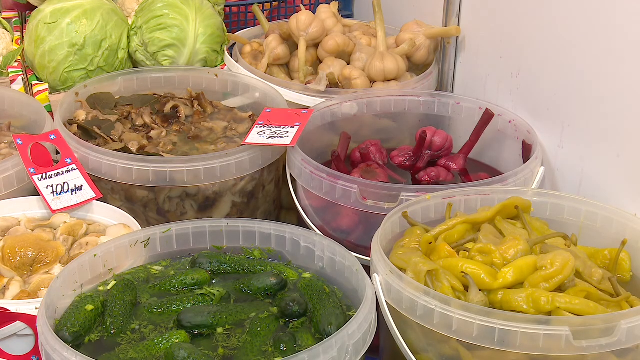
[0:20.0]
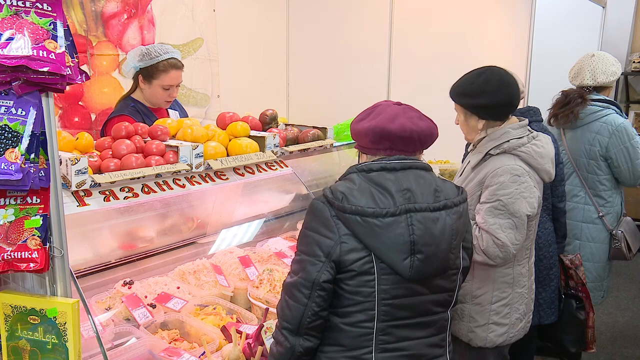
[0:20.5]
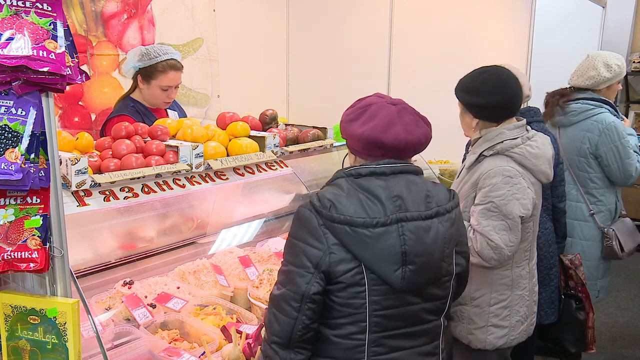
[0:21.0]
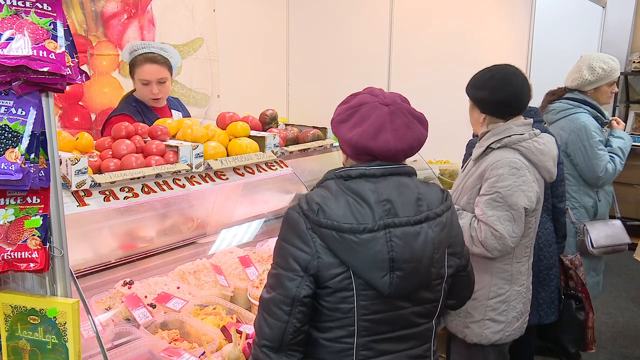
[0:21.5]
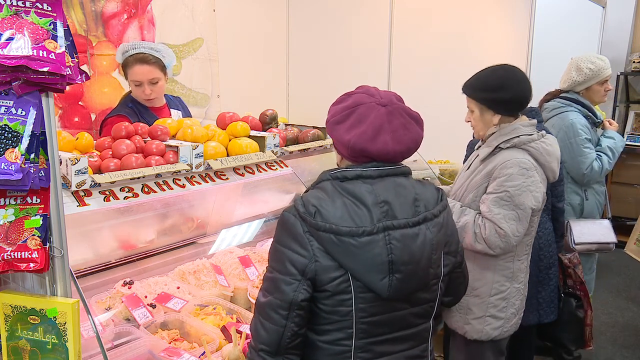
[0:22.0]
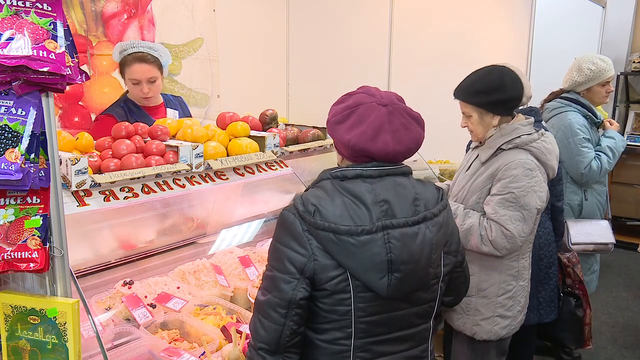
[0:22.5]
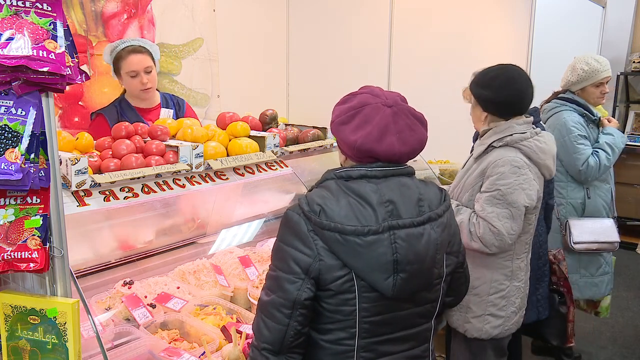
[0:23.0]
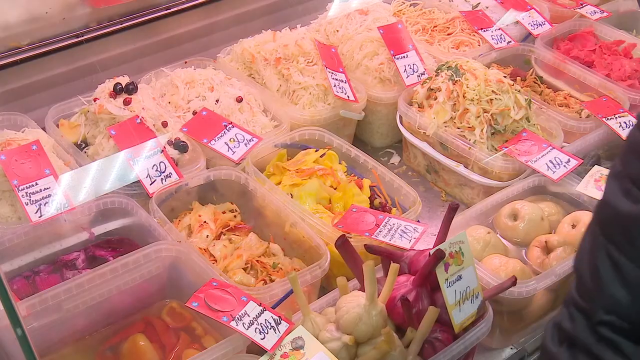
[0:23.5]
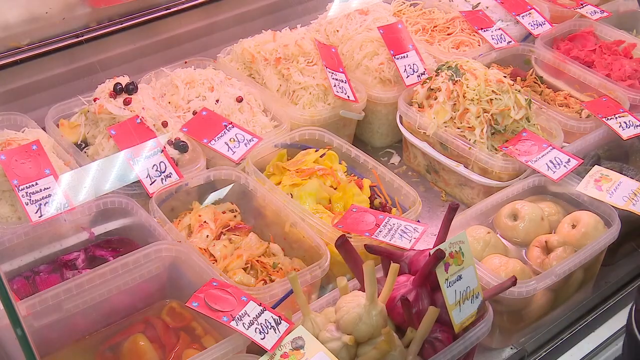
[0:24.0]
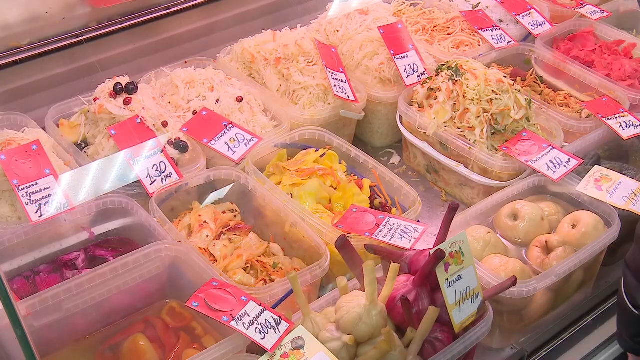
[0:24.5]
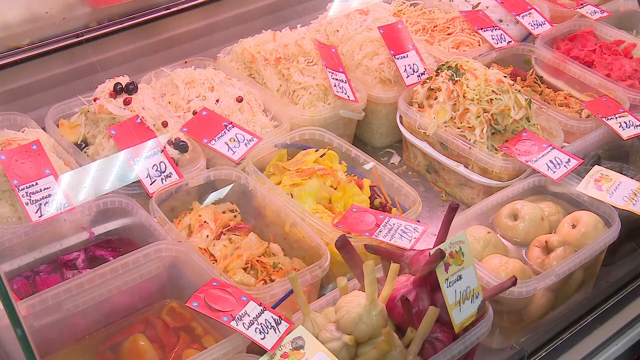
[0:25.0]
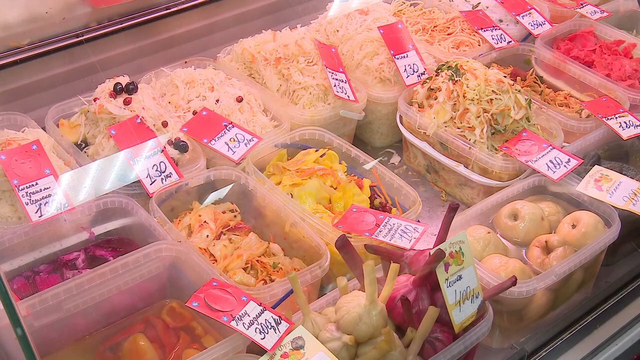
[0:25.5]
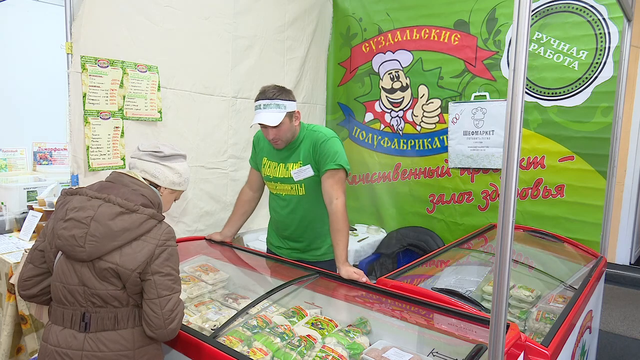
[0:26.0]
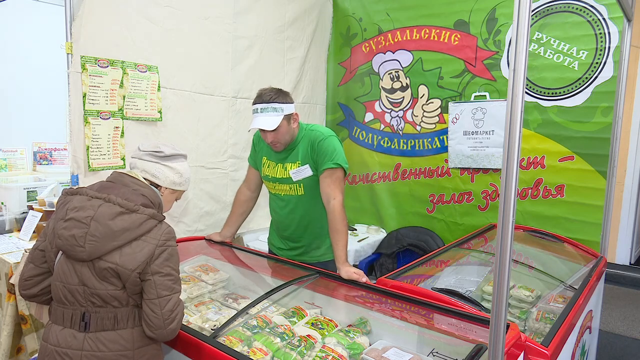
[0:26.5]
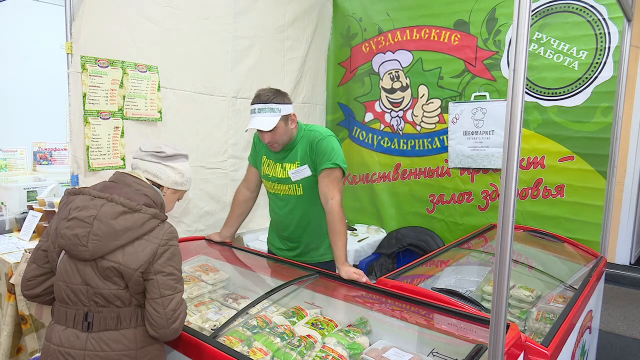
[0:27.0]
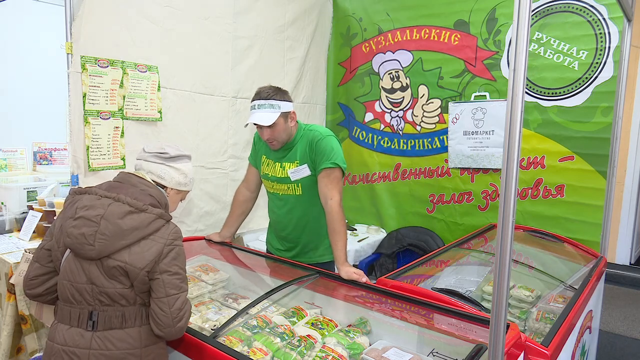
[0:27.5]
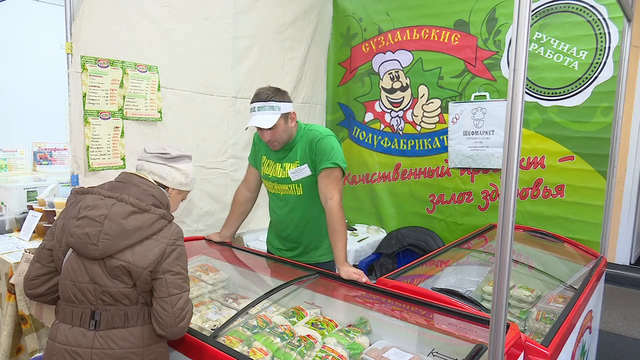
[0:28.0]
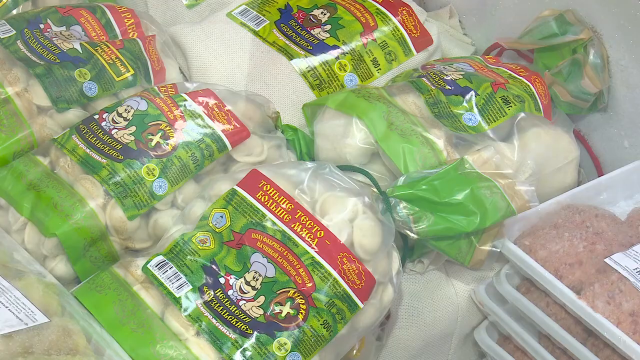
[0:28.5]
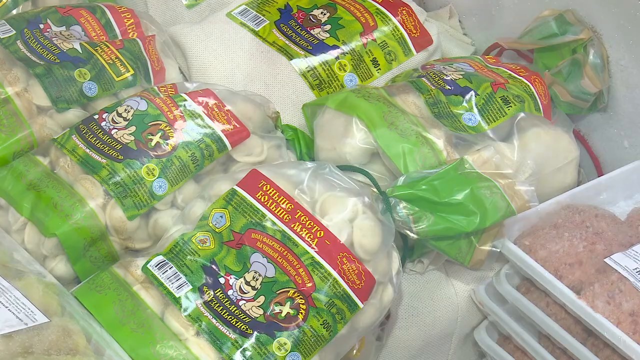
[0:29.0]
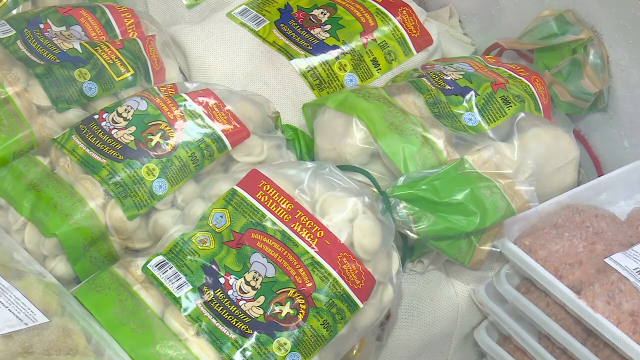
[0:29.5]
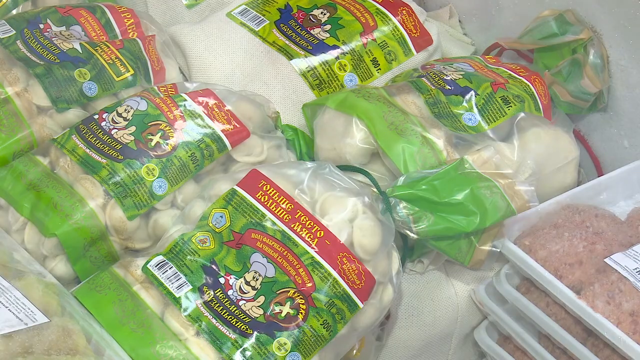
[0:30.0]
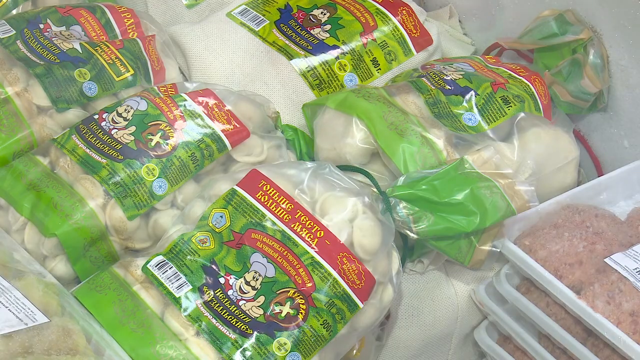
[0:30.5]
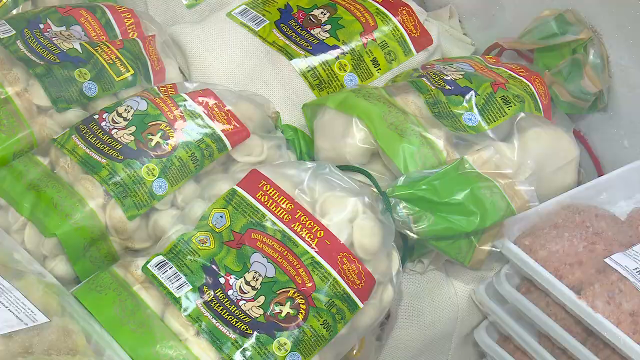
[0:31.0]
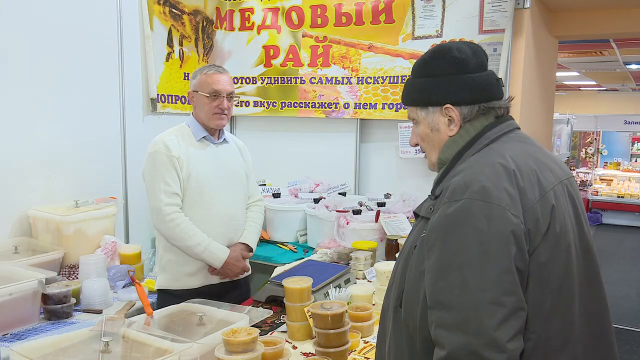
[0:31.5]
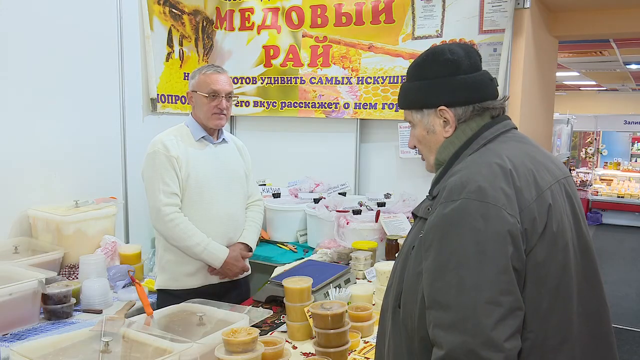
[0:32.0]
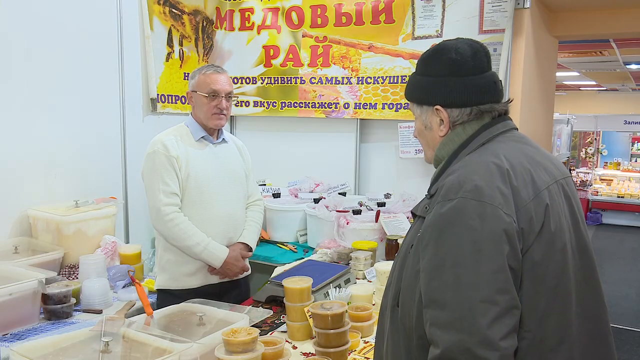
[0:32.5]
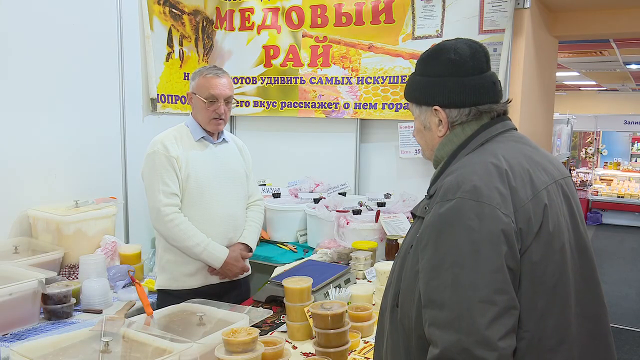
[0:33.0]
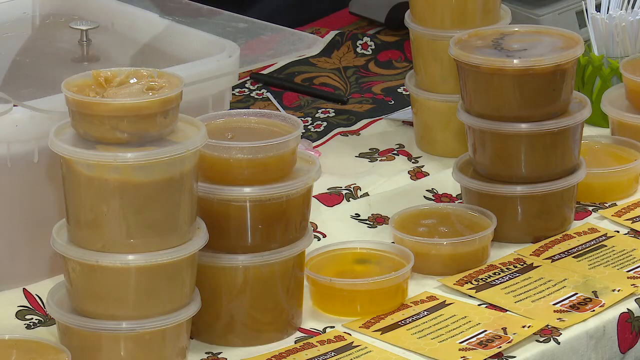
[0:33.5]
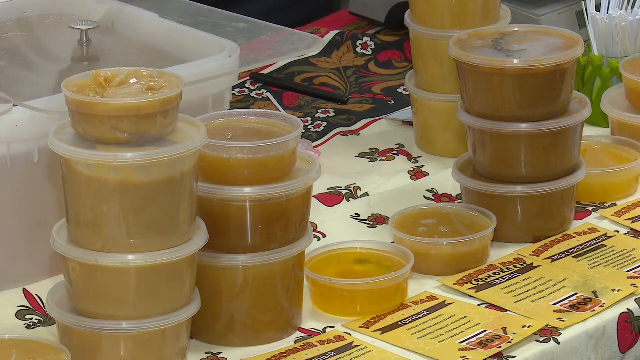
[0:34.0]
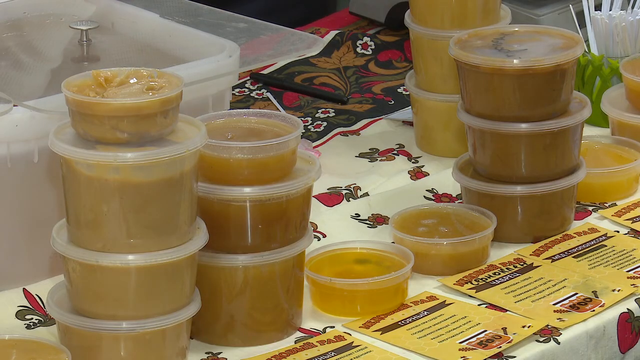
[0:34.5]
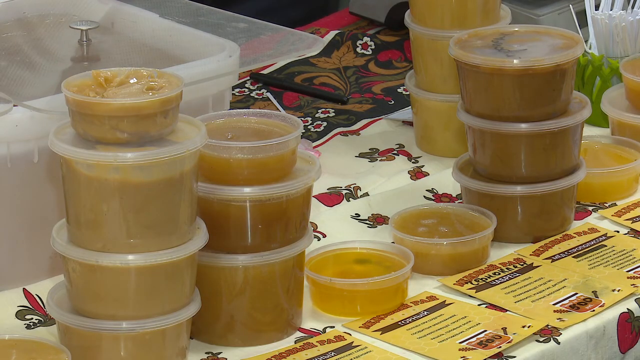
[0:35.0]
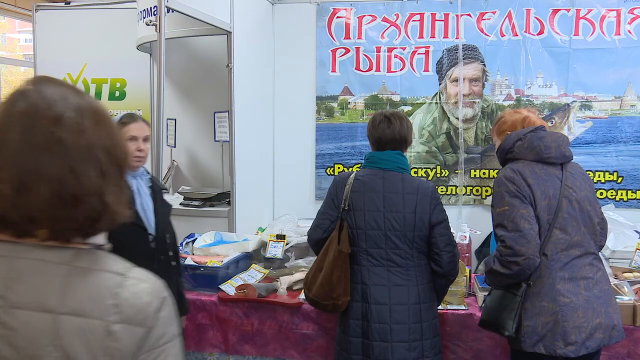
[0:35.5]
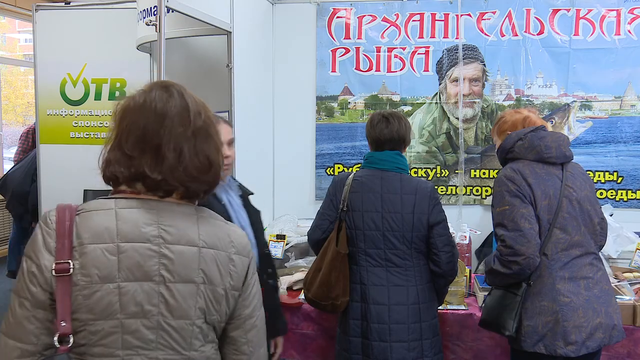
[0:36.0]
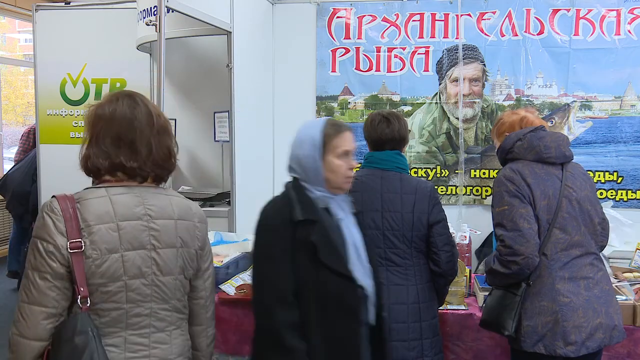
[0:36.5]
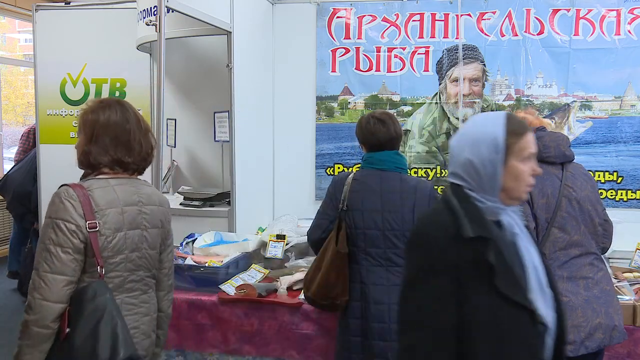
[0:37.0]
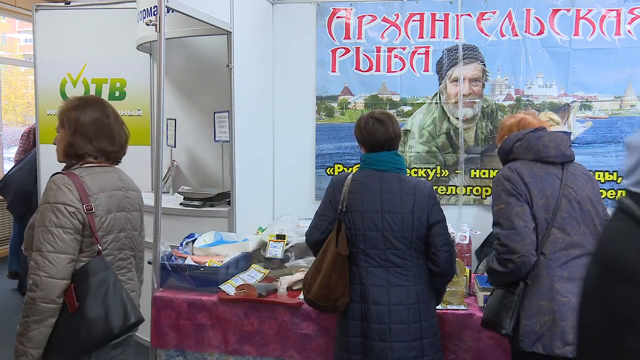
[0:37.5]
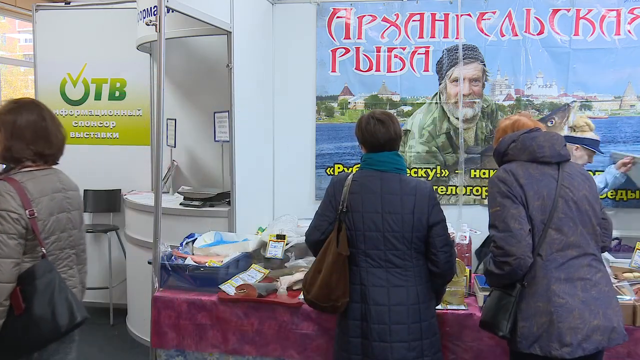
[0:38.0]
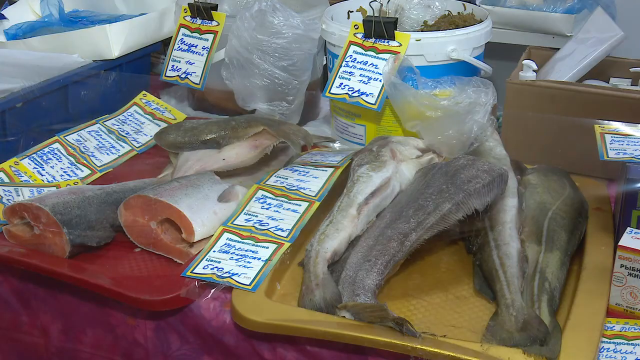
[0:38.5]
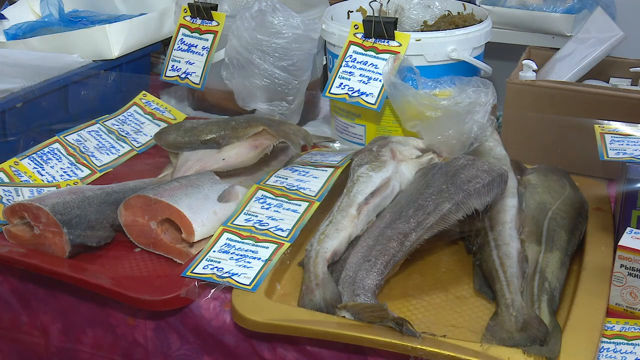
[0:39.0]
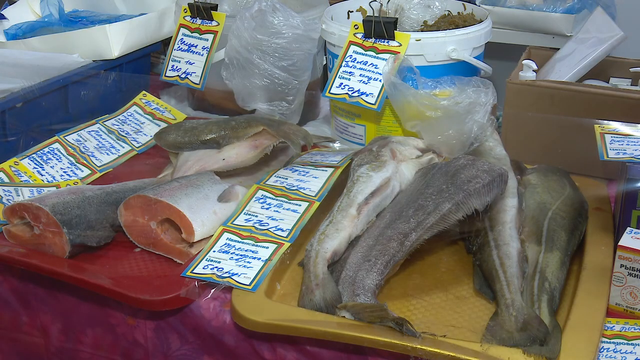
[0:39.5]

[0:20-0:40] A white wall comes in from the right side, about halfway across the frame. A little of a blue basket shows at the top, left of center; it looks like it holds apples, and there are two heads of lettuce. In front of it are big clear plastic buckets with white handles, holding different fruits and vegetables, each with some sort of juice in it. The video cuts to three women standing in front of a plastic area looking at some food, with a person behind the counter. The three women are on the right side, facing to the left, with one in the background, and behind the counter is a woman in a hairnet. Fruit and vegetables are on top of the counter, and three plastic bags hang down on the left side: the top one purple, then a lighter purple, then red. Another woman looks into what seems to be a cooler with a clear lid and red handles, and a man works behind the counter. The video then cuts to a man in a white shirt and glasses, with gray hair and his hands crossed in front of him, talking to a man on the right side in a black boggin and a greenish coat, with food in containers between them. It then cuts to small containers of some sort of juice, and the shot cuts as another person walks by the camera.